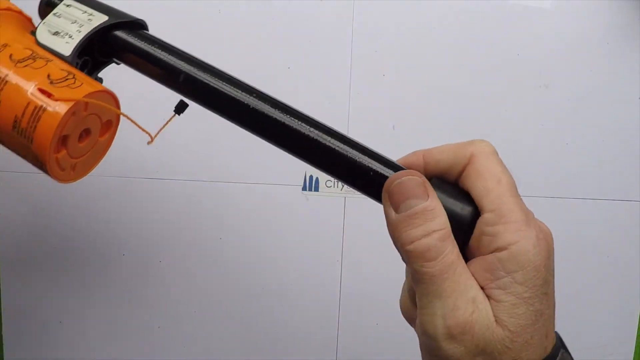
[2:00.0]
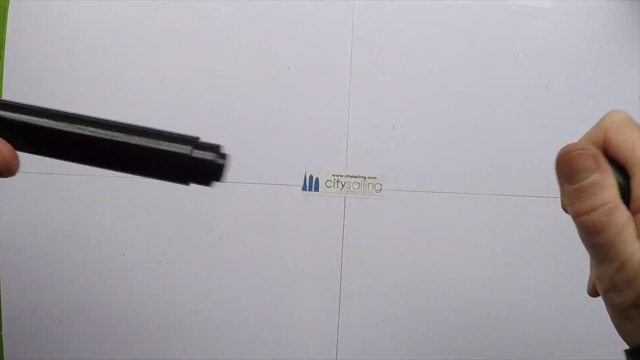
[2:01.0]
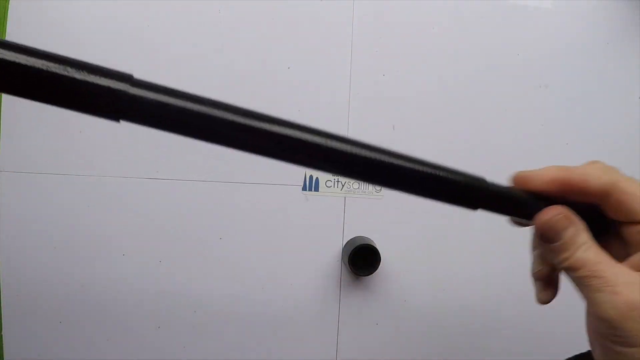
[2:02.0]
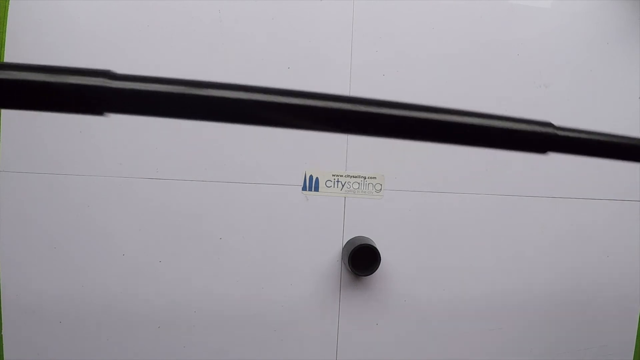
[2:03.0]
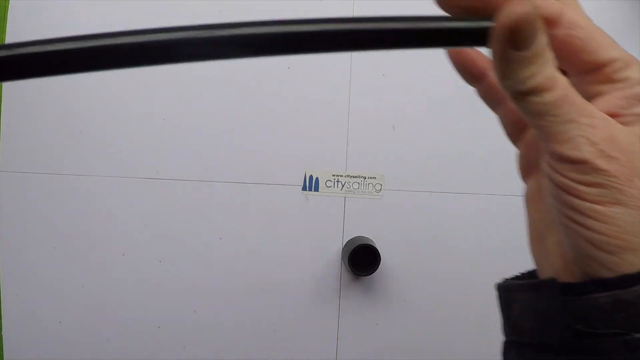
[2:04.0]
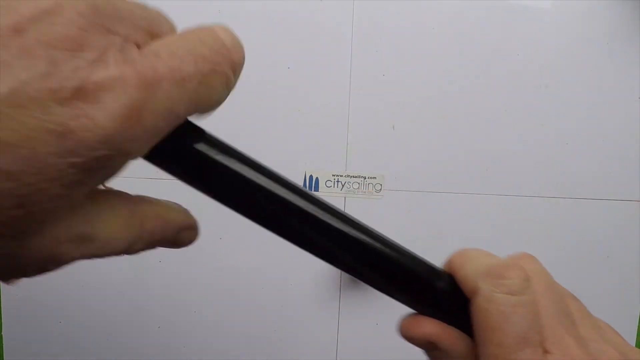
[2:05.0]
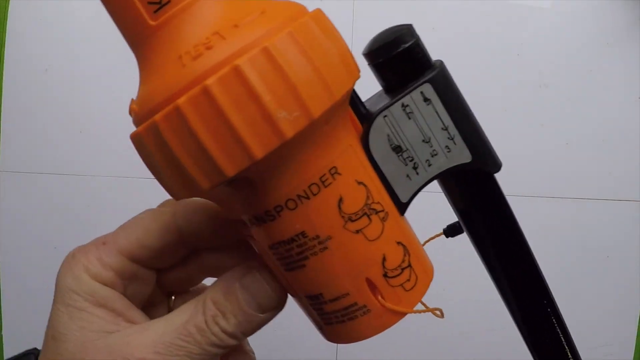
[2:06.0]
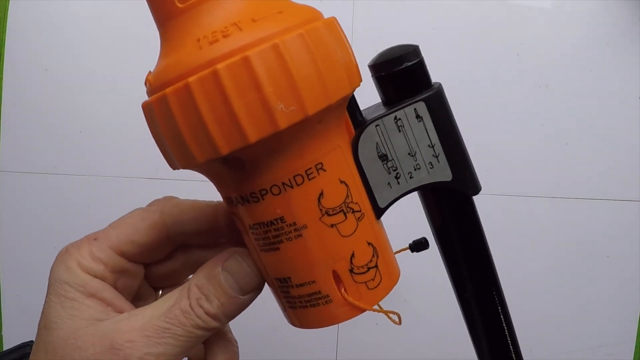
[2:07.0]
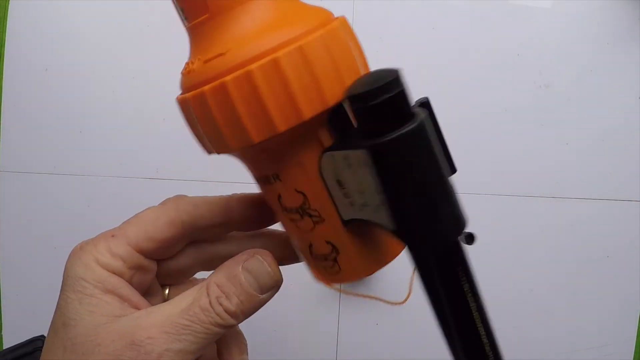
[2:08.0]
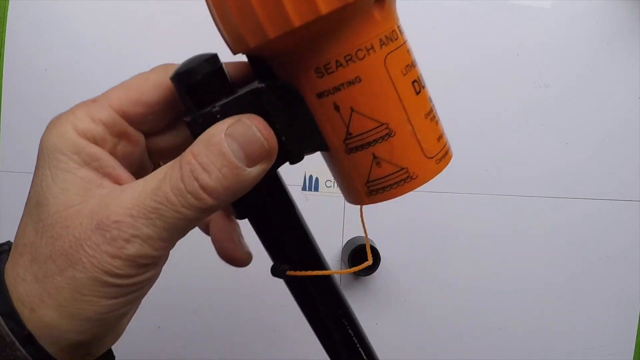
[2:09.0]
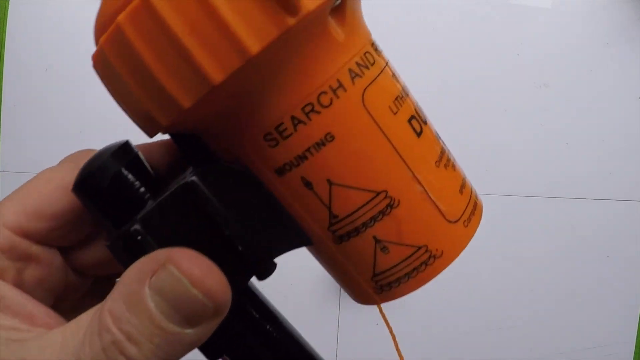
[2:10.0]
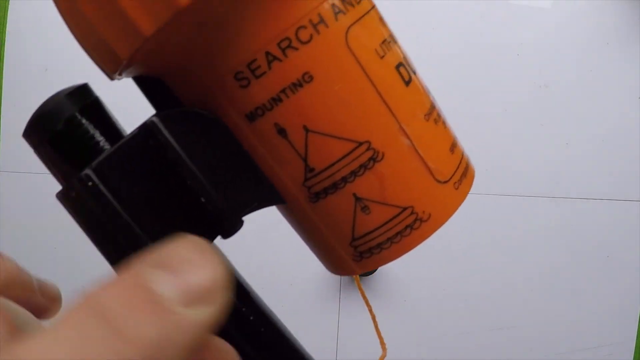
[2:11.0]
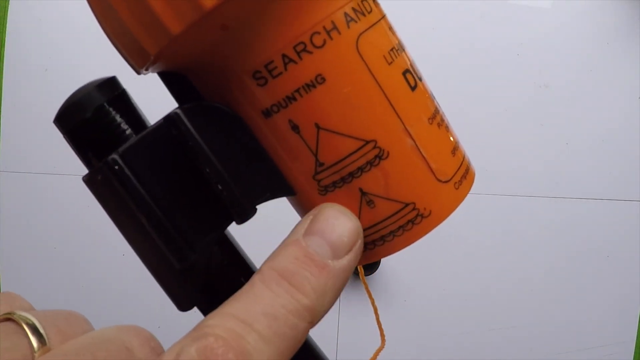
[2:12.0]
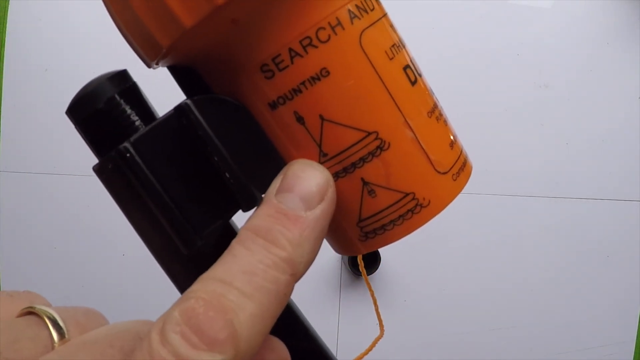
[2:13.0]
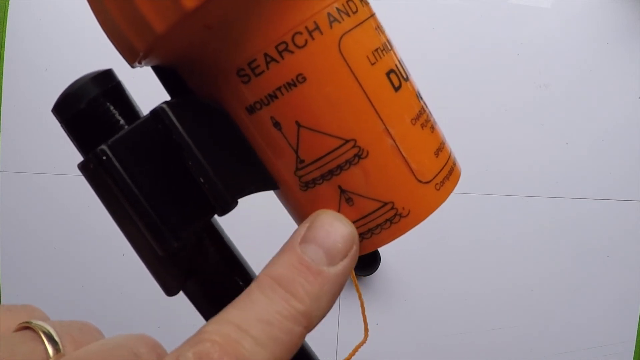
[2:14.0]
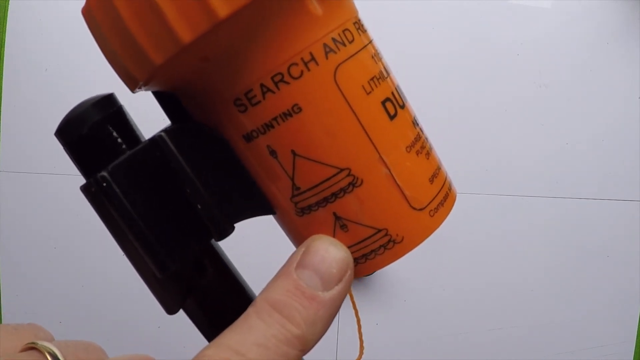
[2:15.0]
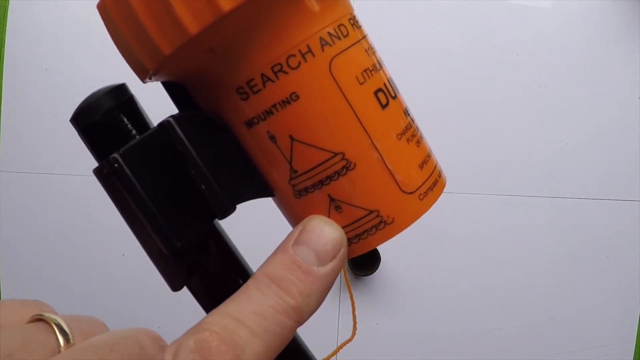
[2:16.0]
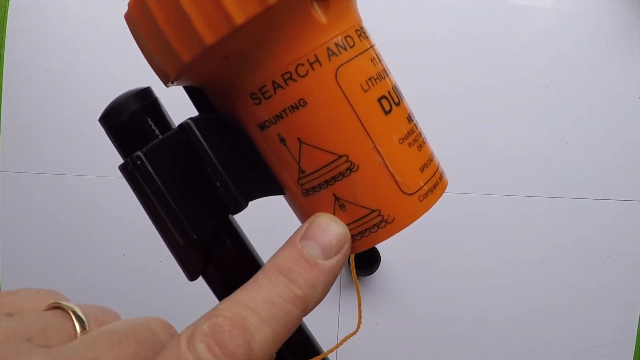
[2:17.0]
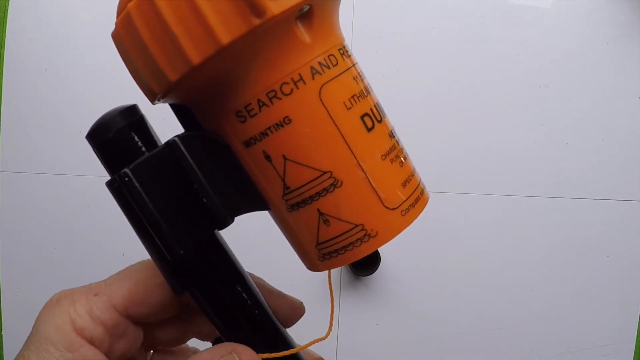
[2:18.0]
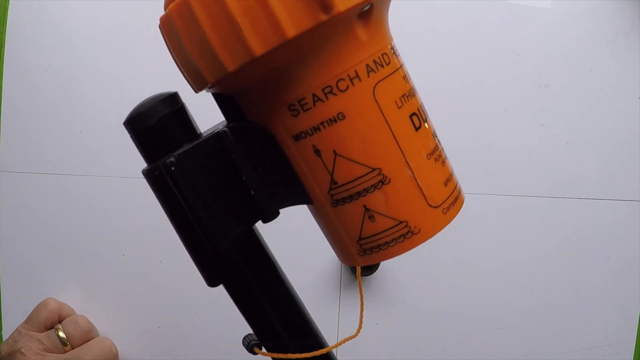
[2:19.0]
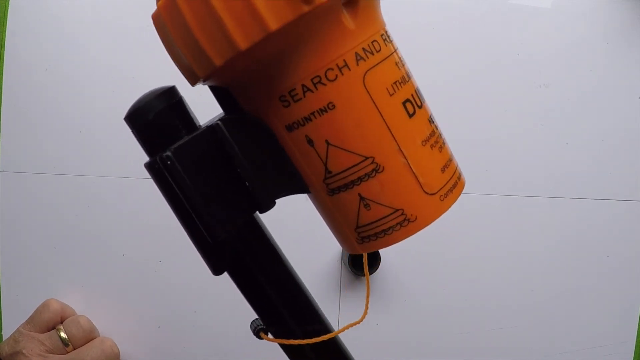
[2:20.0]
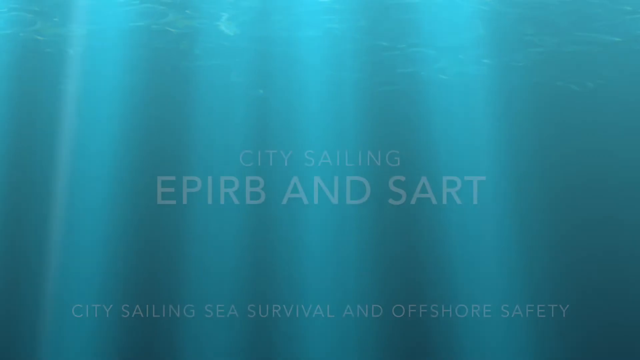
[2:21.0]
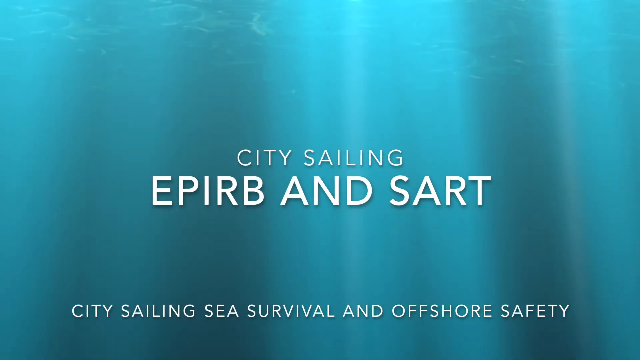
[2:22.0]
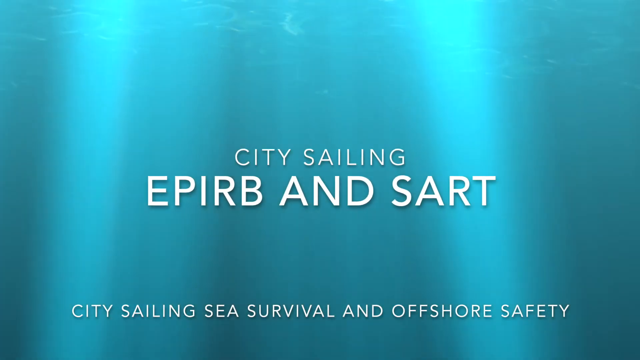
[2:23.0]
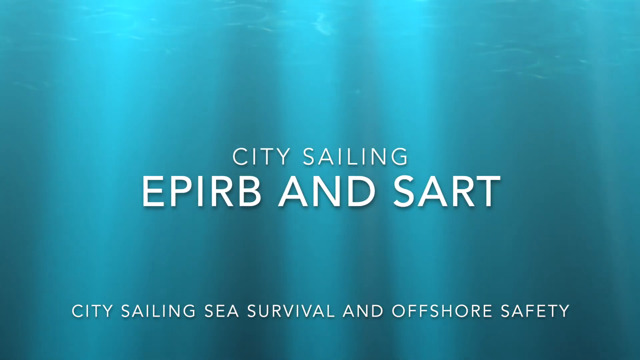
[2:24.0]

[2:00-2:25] The man with the ring continues the demonstration against a solid white background that appears to be four solid white panels. The dark sleeve of his shirt is visible as he twists the bottom of the black stick attached to the orange piece of equipment, removes the bottom cap and pulls out an extension, which looks to lengthen it by possibly one or two feet, showing how it can be made longer. He points out on the orange test tube that it is a dummy tester, then points to the different labels on the orange body, all in black lettering. The video then goes back to the city sailing screen.